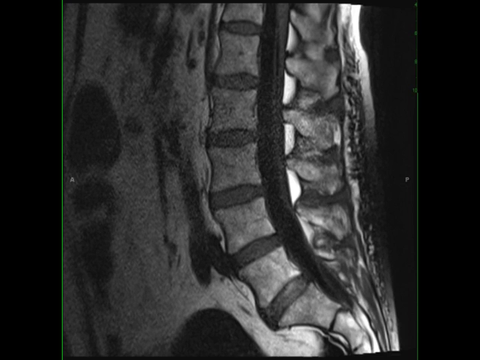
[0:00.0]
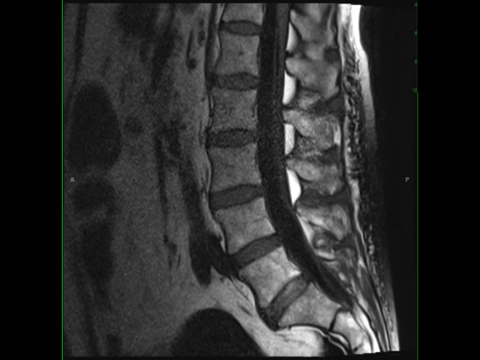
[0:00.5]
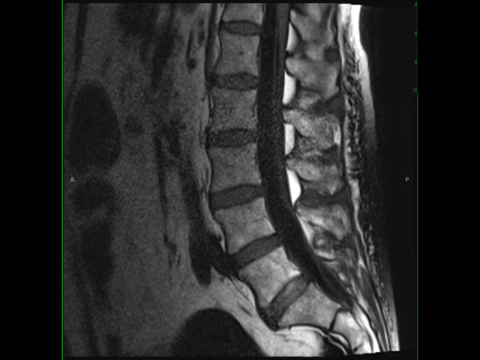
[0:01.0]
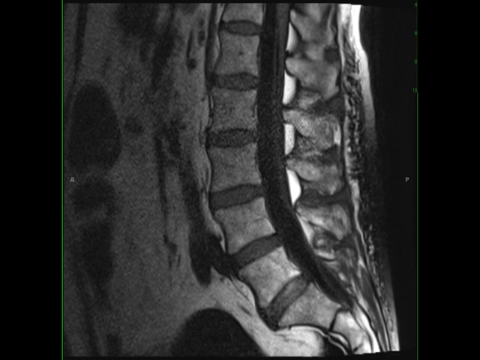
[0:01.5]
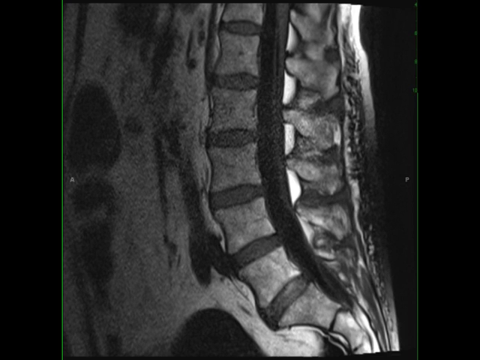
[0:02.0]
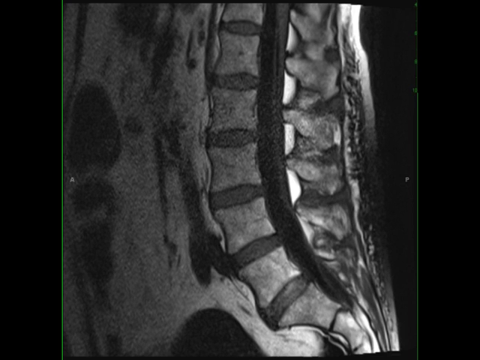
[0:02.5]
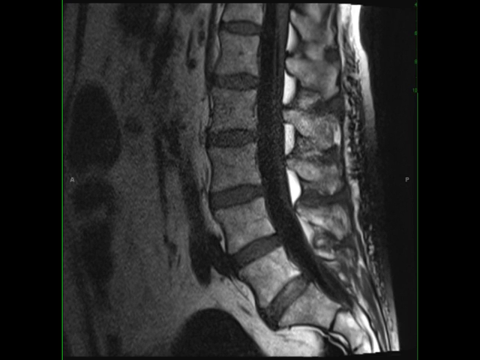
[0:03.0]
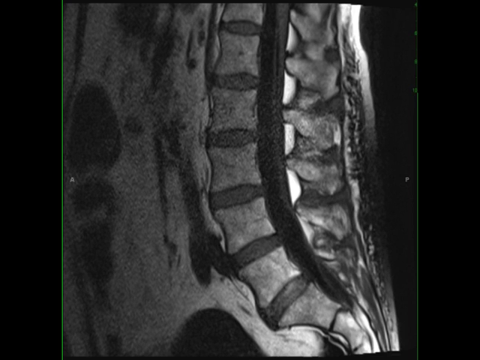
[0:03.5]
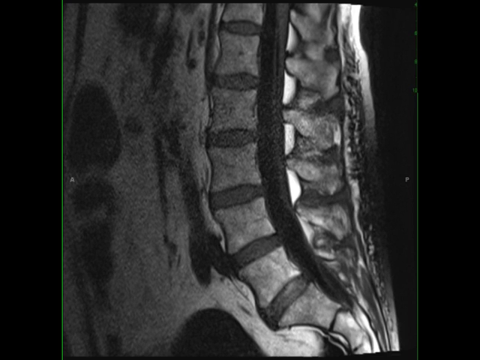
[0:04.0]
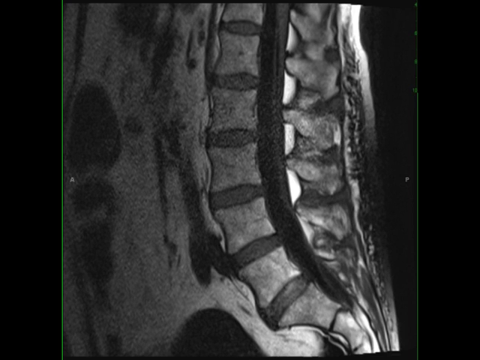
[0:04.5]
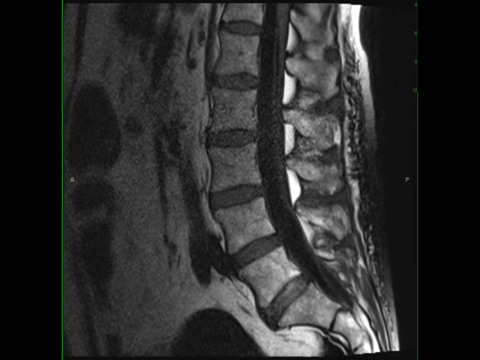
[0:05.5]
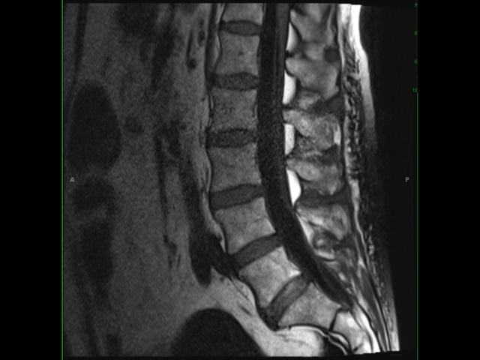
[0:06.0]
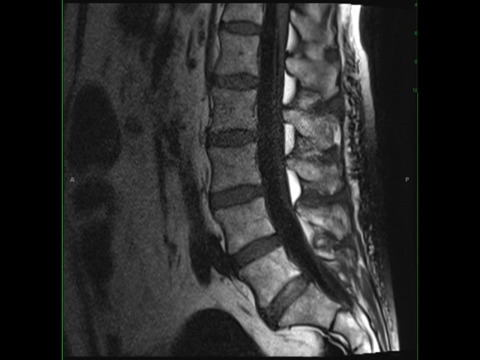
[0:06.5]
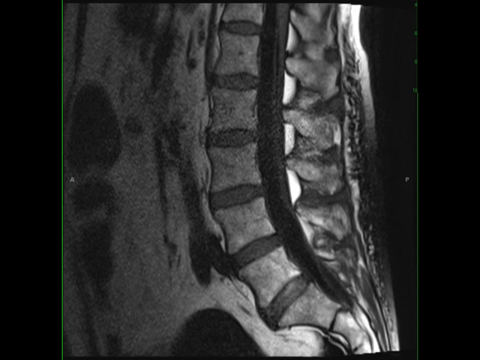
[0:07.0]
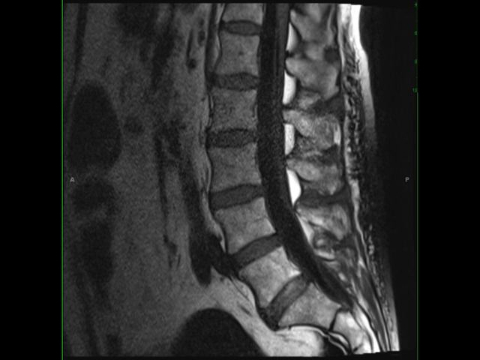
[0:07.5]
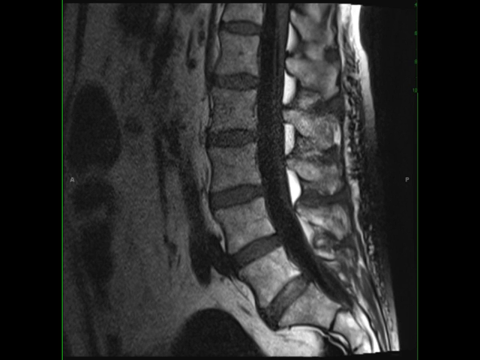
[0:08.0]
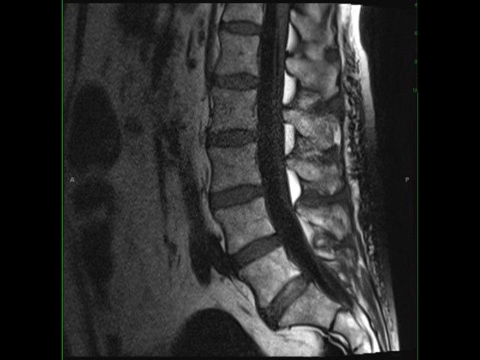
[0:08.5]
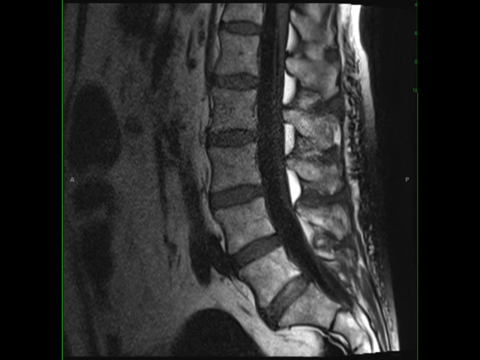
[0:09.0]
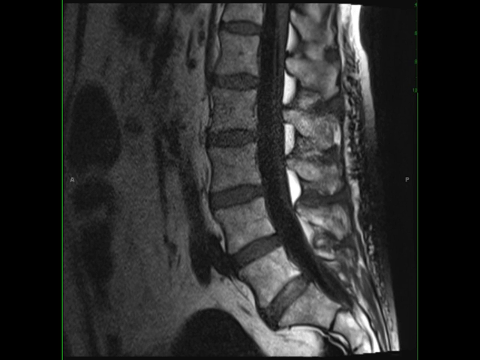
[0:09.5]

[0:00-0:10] The video opens on what looks to be an X-ray, perhaps of someone's spine, in black and shades of gray. Vertebrae are visible, so it appears to be a spine, possibly shown in a side-on view of a person, though whether it is a human spine is unclear. Nothing in the image moves.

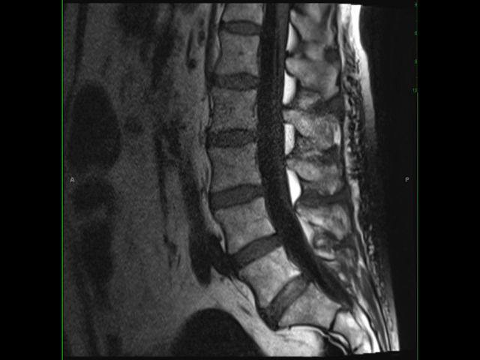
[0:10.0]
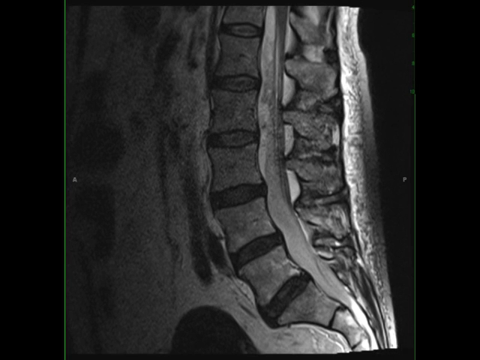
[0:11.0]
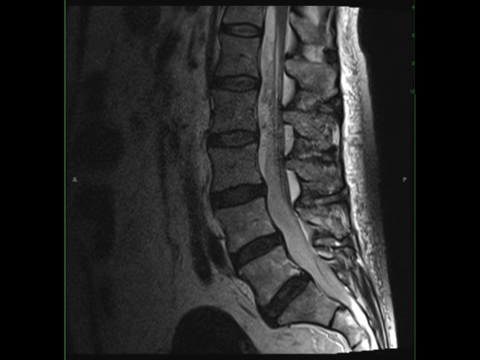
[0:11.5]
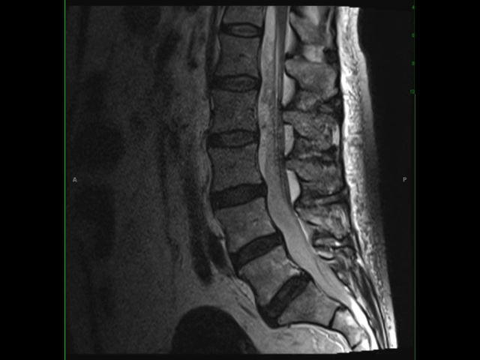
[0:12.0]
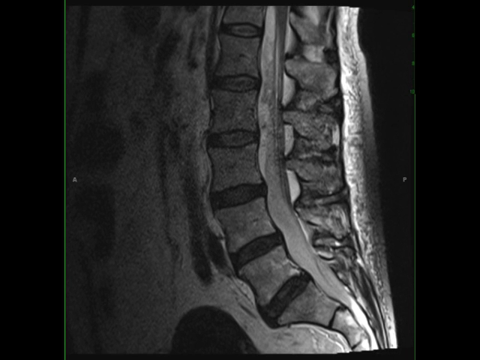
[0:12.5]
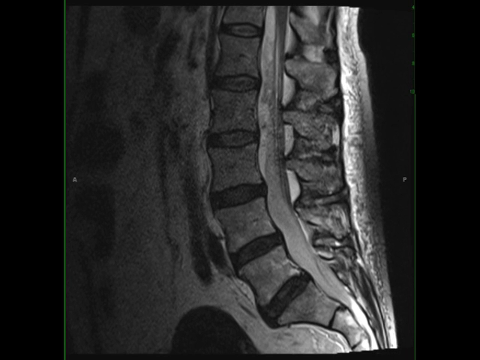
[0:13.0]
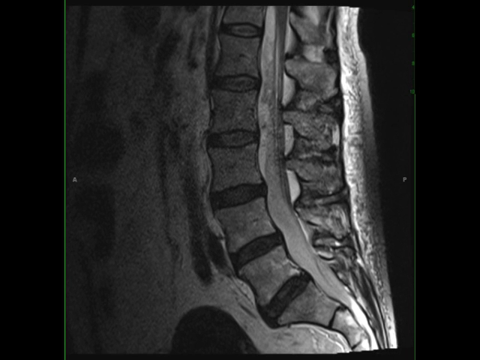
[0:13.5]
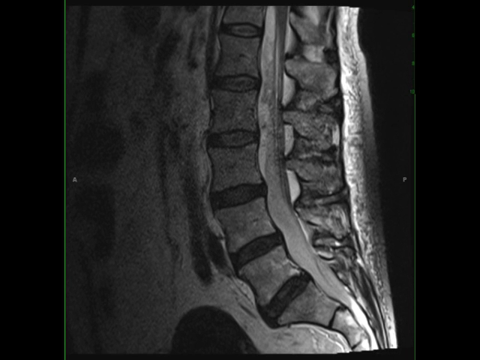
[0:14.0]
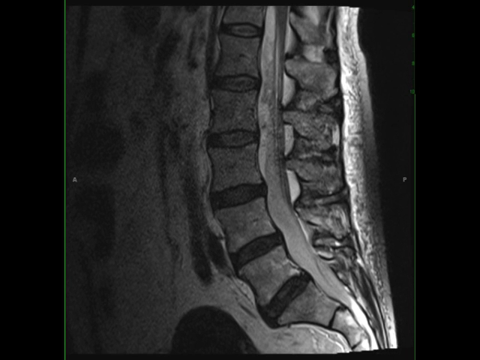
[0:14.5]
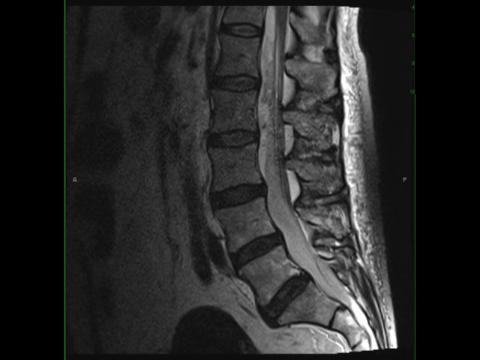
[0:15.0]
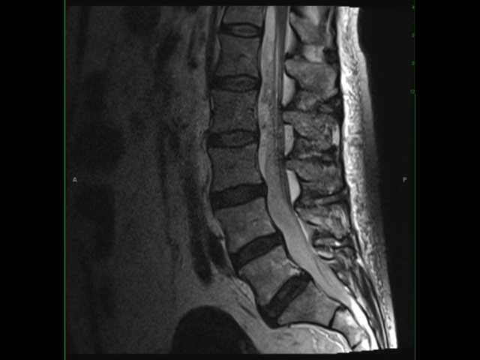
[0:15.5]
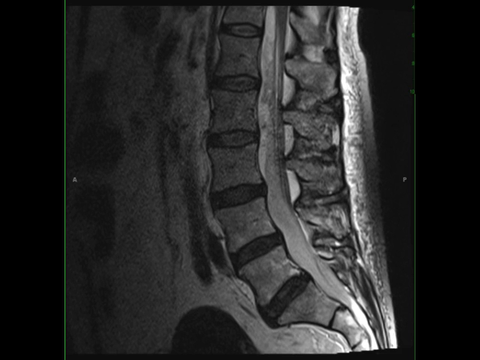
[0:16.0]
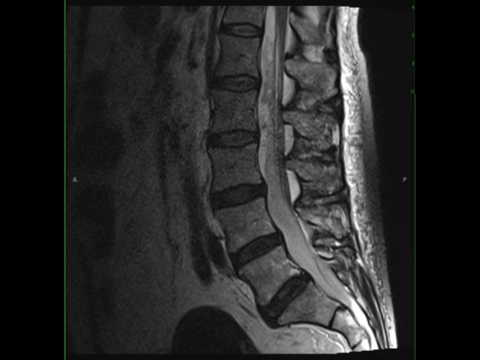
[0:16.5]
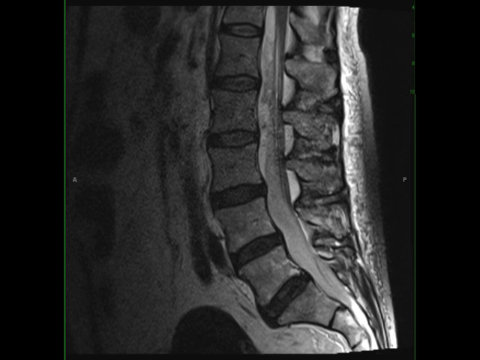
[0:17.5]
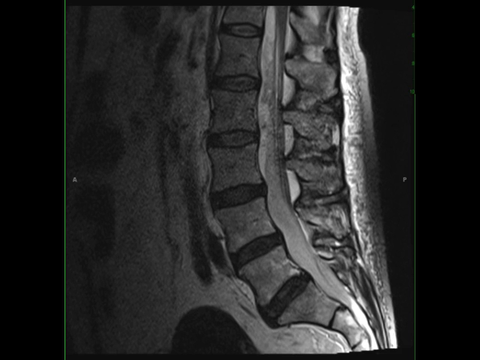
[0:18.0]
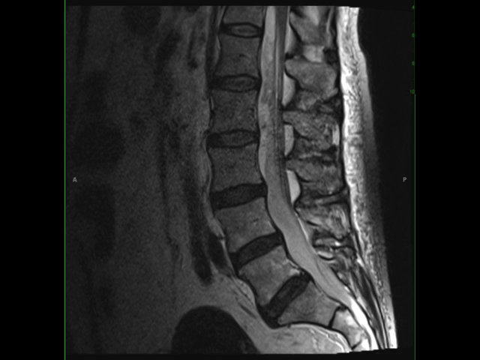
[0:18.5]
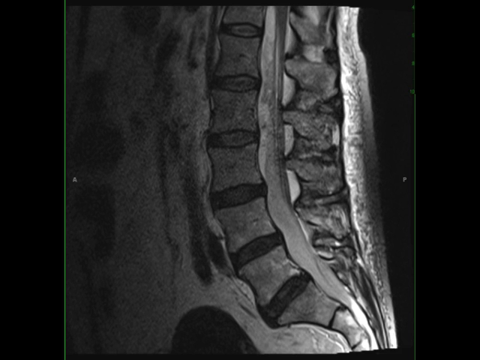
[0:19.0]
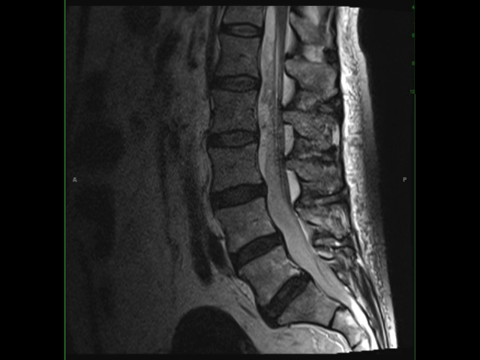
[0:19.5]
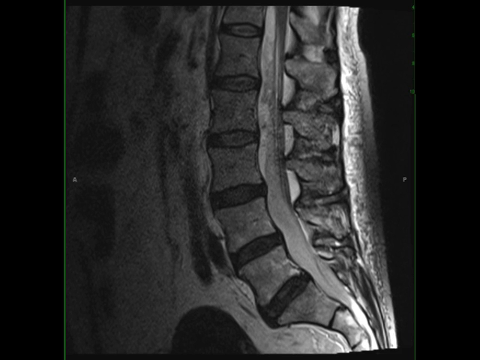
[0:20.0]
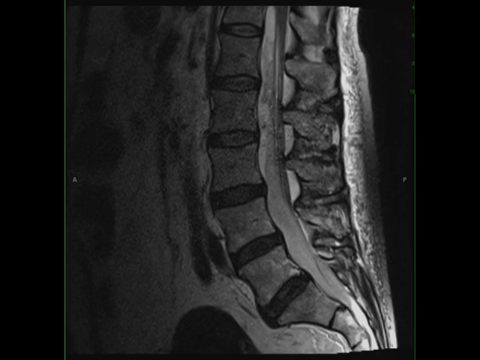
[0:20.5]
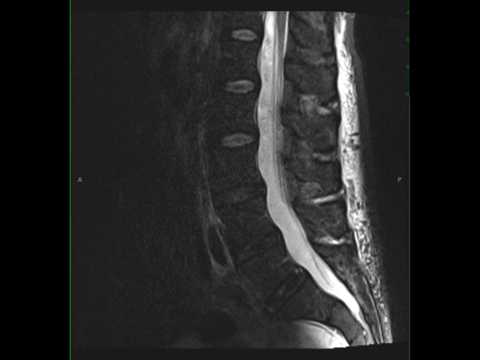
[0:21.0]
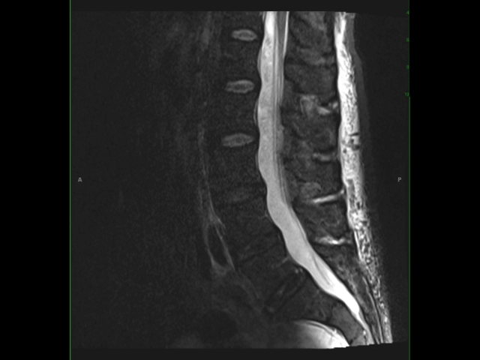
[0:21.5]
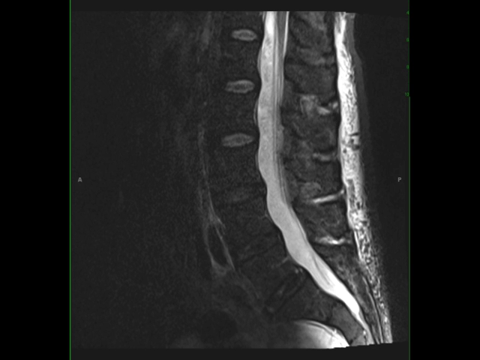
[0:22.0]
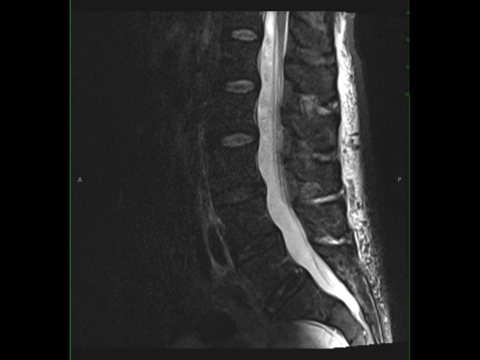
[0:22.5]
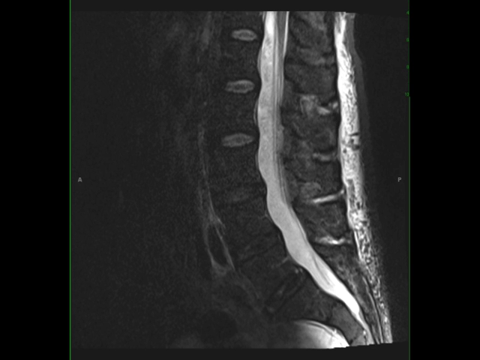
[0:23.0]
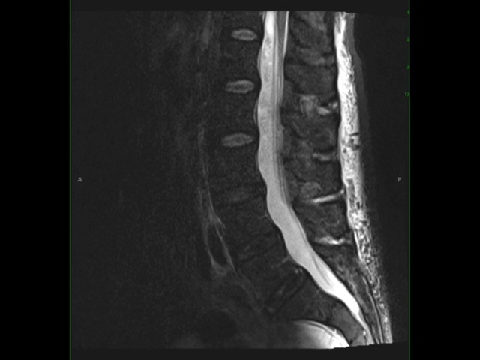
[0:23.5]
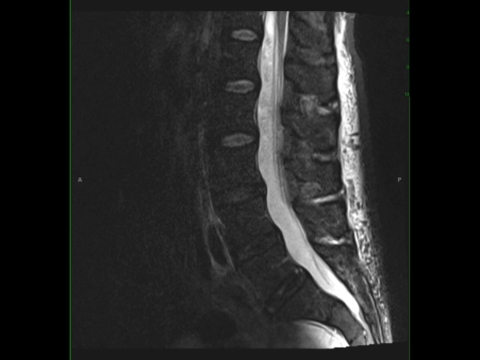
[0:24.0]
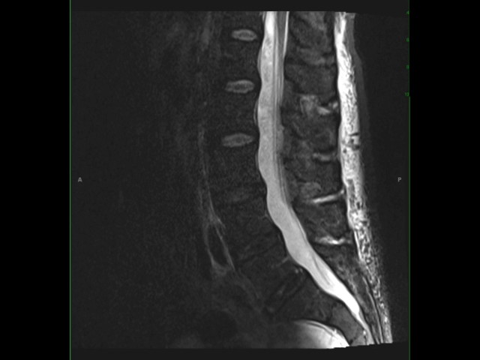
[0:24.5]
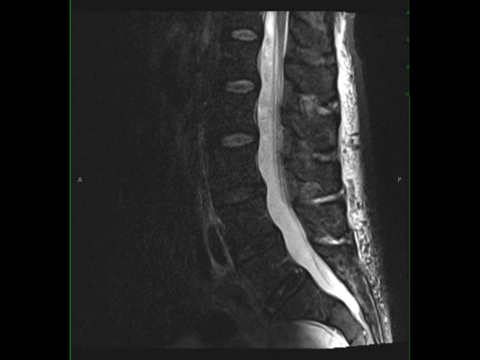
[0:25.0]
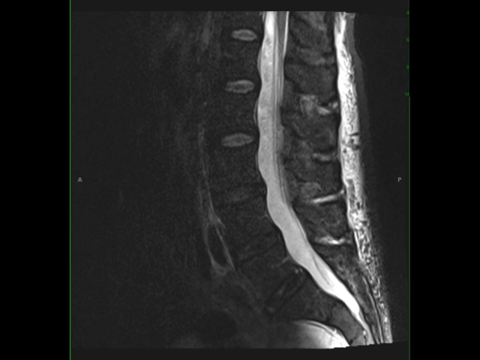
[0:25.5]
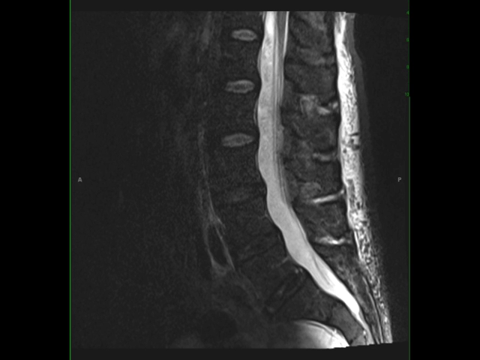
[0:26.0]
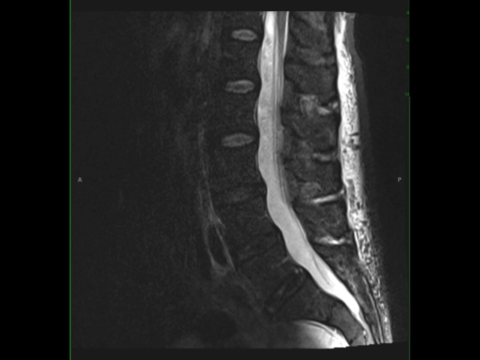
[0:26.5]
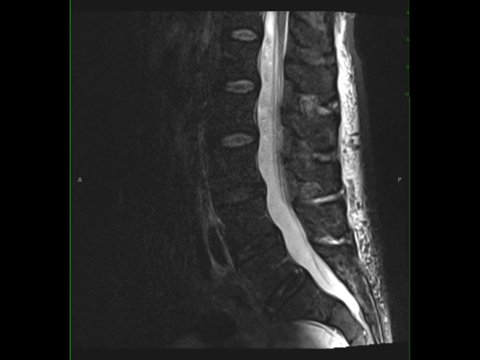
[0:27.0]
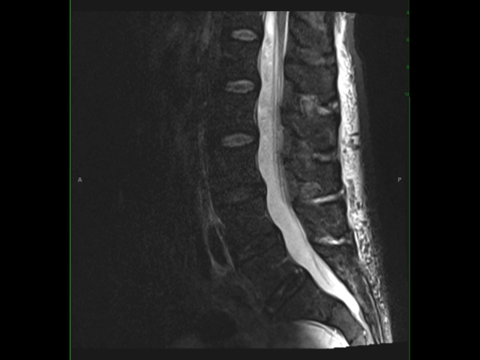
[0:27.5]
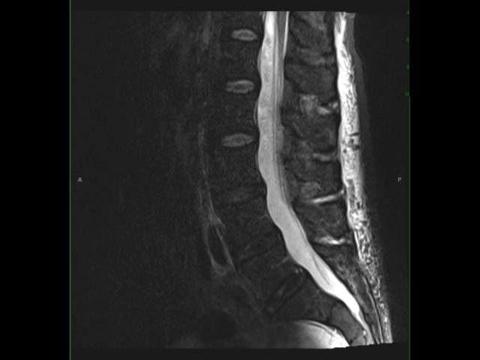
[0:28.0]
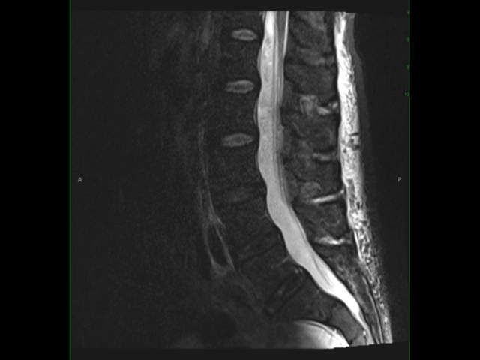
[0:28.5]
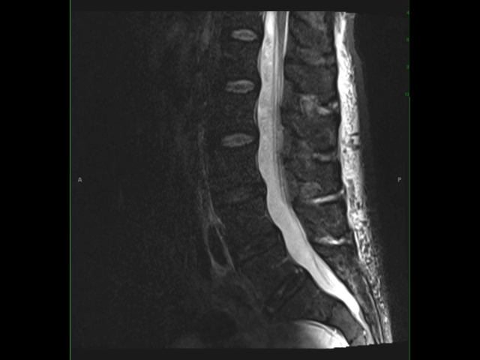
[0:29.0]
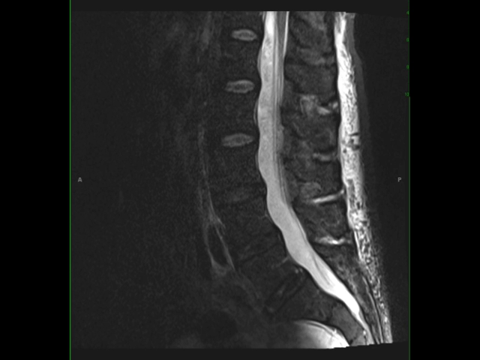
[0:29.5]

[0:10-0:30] A side-on X-ray view of the spine of some type of animal, possibly a human, is shown. After a few moments of the initial static image, the contrast changes, making certain parts of the black and gray image easier to see and others less defined. A few moments later the contrast is adjusted again: the image is now almost entirely black, with certain portions made white, almost like a negative of the initial image. The left and right edges of the image show a green color; the green is much more pronounced on the left side, where it is a very thin strip. The rest of the image is in grayscale. The image does not move, so it does not appear to be a live view of the animal.